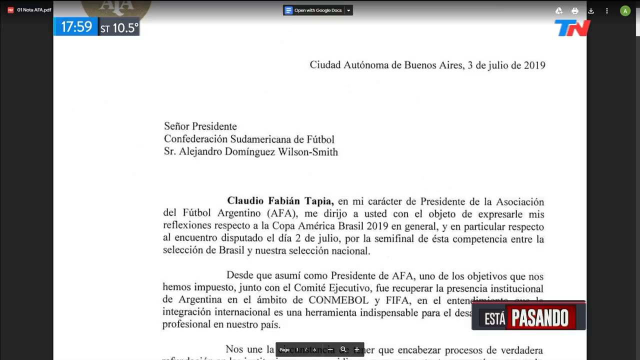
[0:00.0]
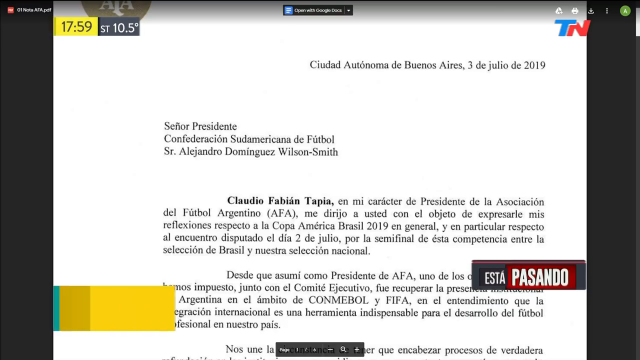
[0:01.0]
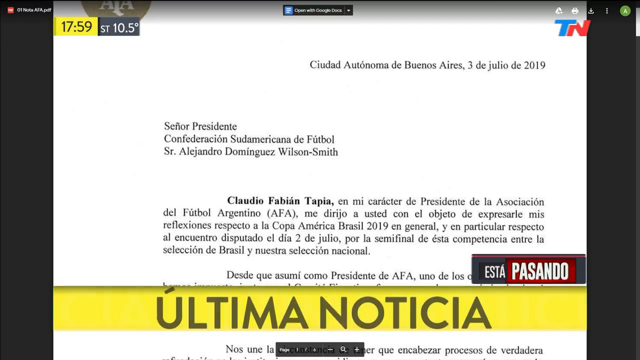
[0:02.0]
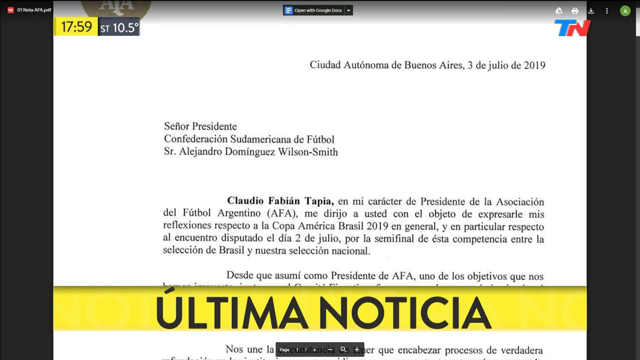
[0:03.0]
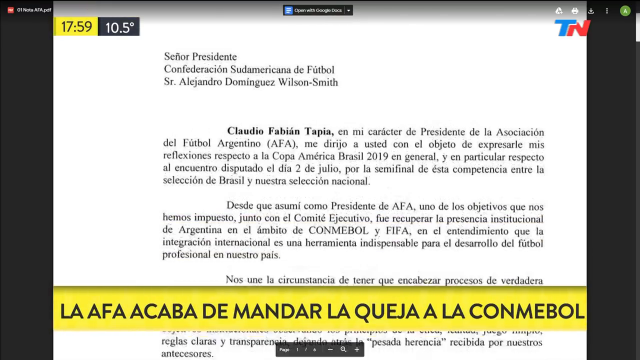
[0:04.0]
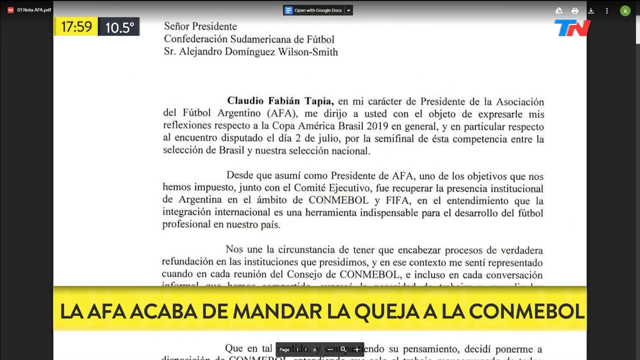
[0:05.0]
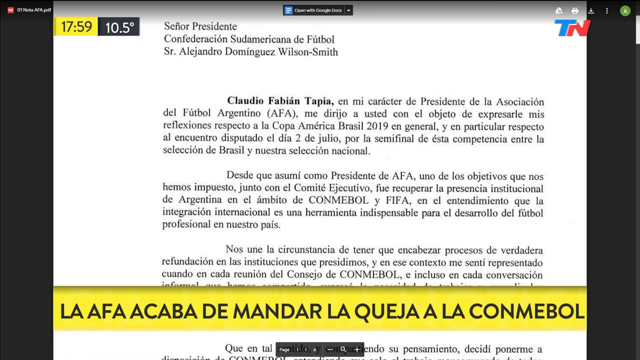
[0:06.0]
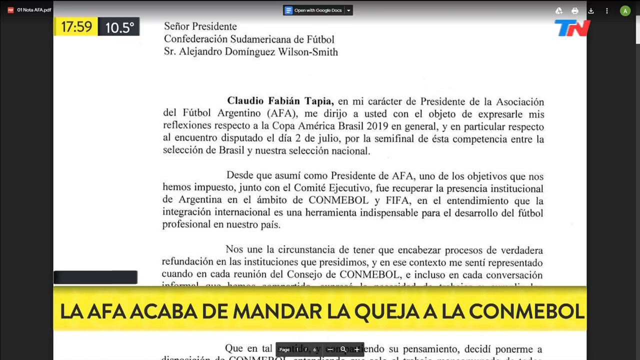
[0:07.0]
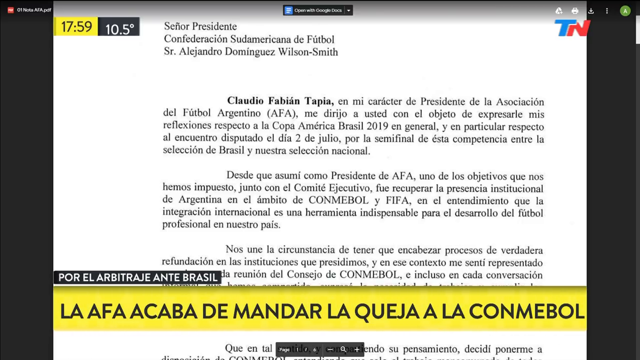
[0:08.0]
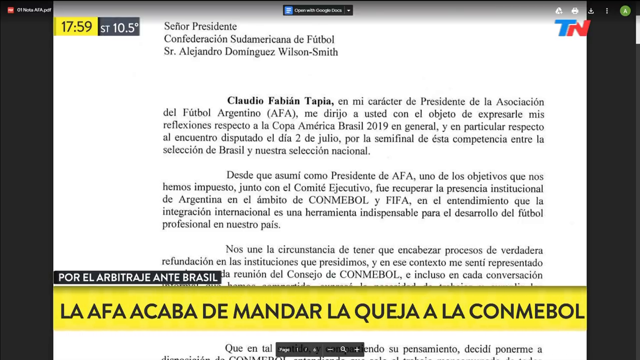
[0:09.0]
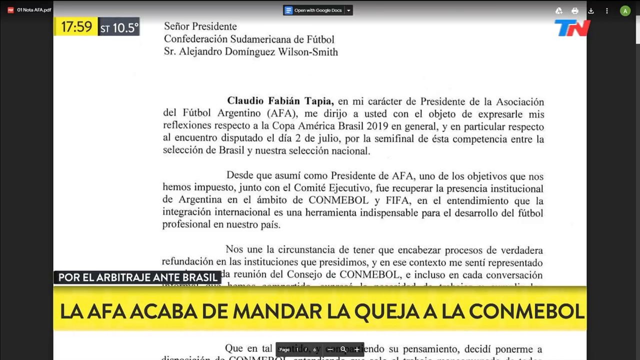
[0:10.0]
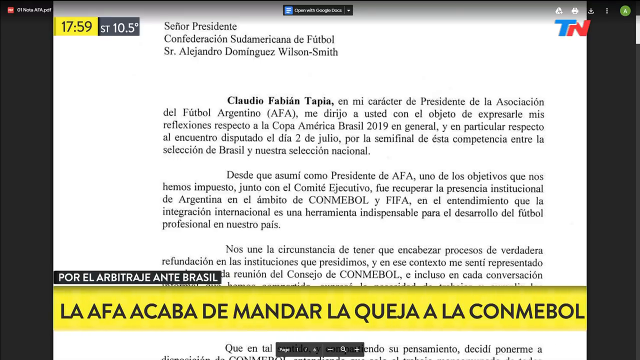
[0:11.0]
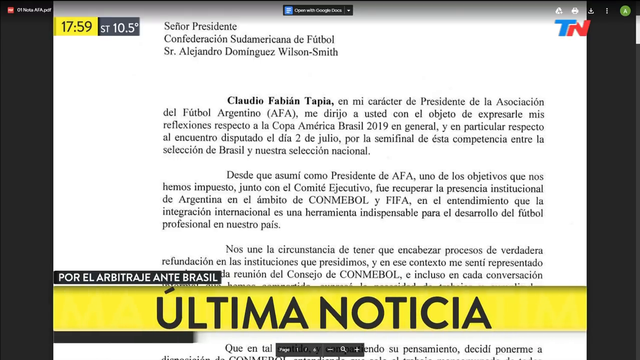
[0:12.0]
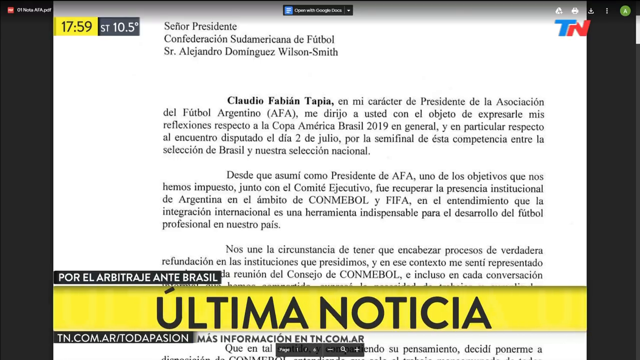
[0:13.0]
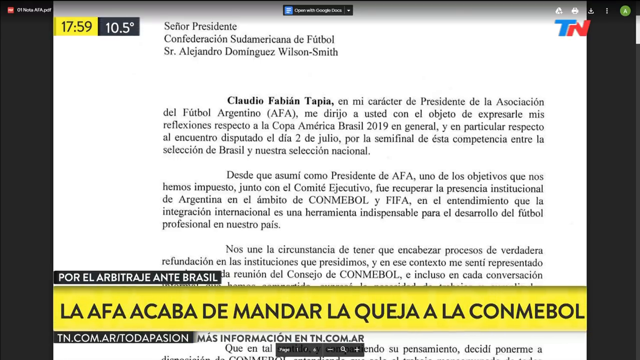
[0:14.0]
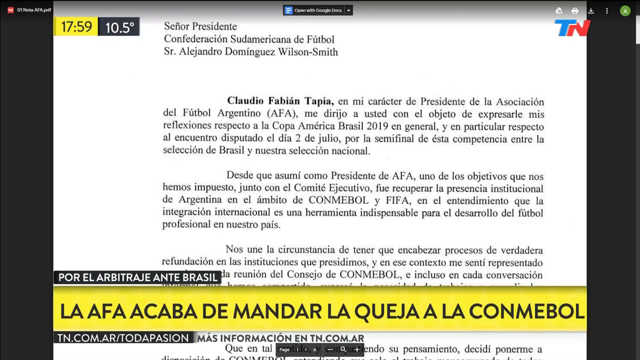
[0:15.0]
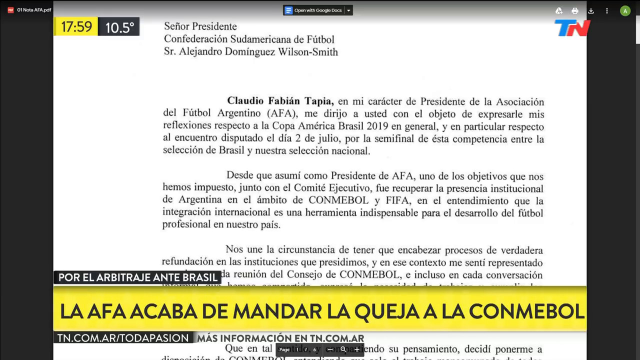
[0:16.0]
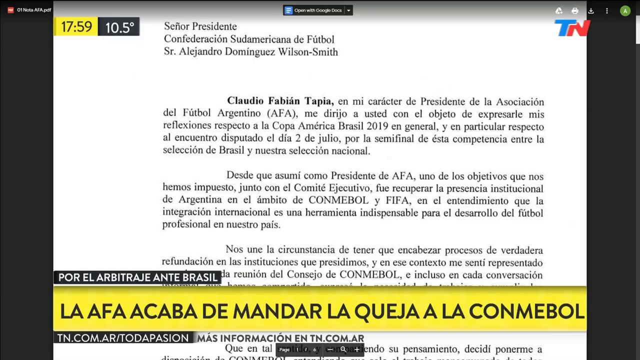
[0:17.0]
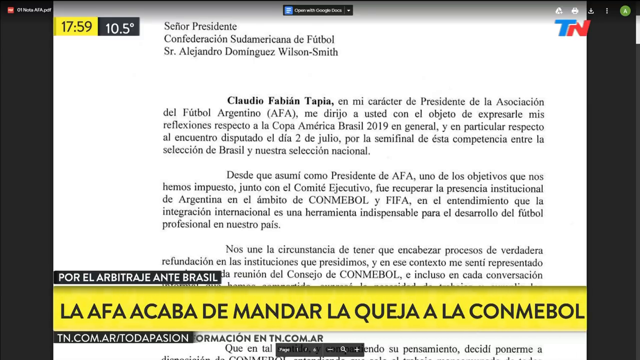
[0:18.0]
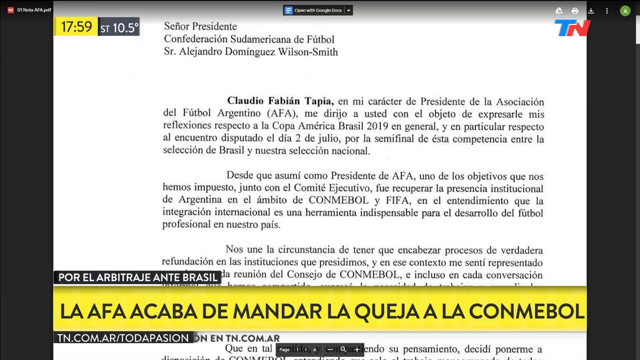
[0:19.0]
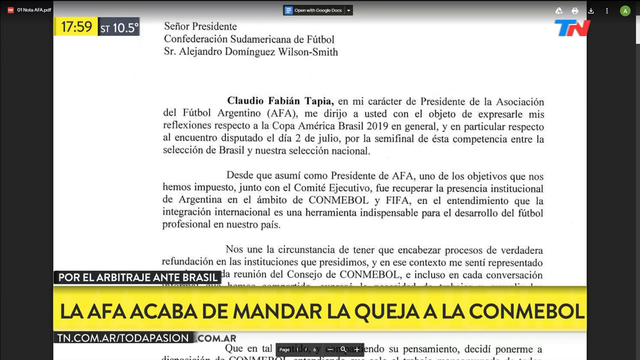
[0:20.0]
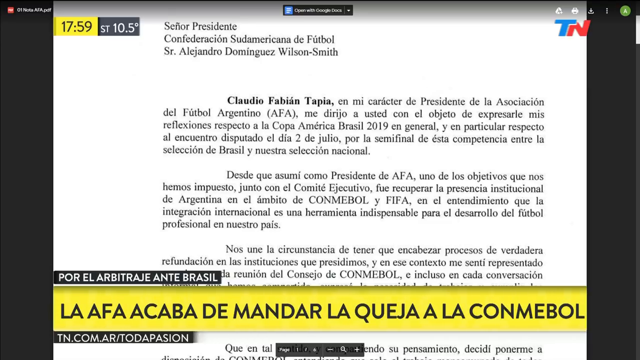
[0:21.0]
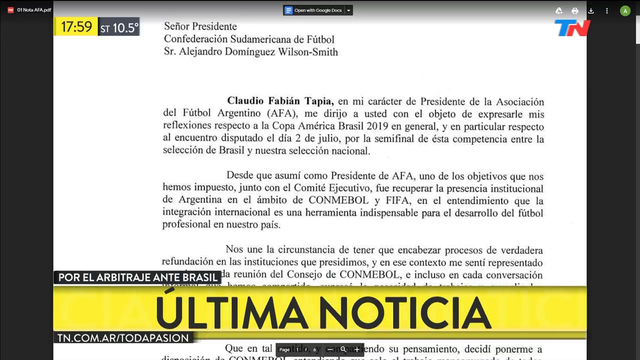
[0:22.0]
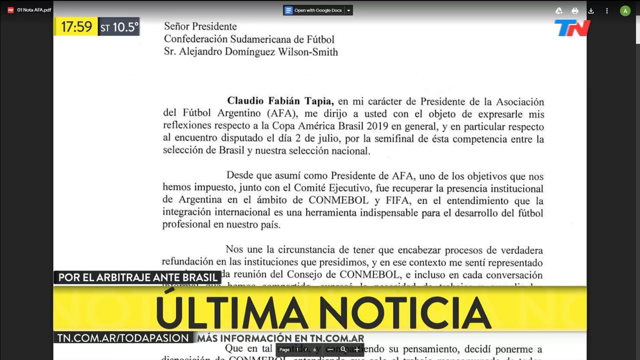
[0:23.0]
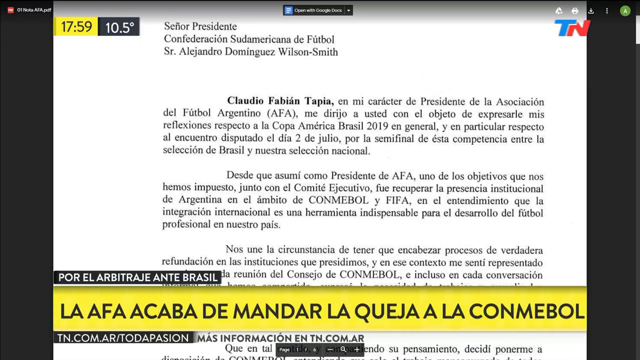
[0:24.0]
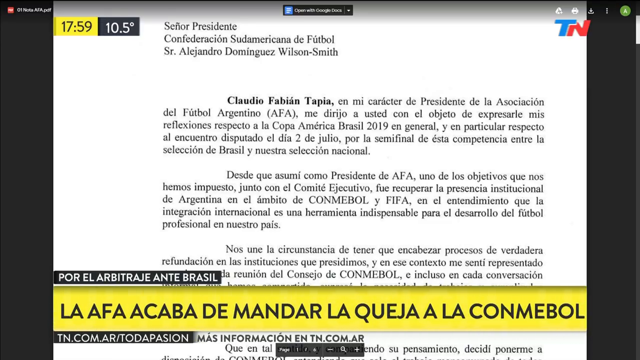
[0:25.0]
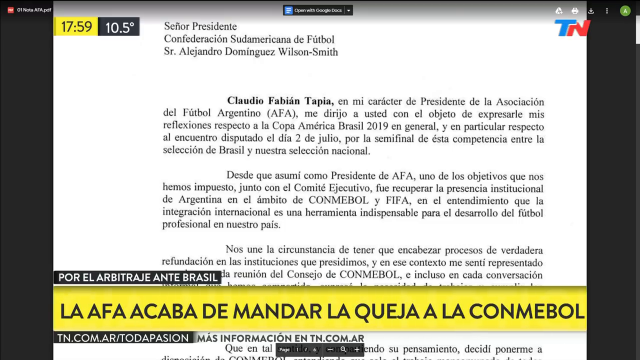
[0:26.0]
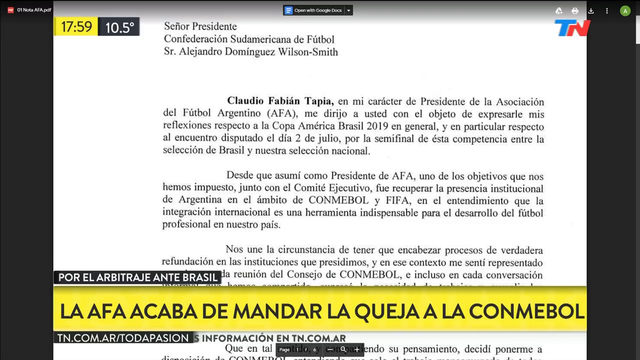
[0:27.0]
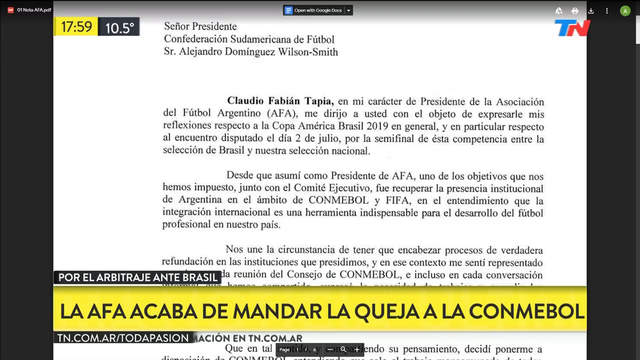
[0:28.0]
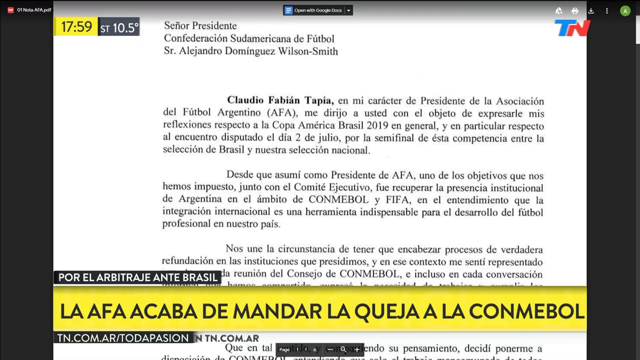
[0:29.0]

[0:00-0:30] The video opens on a page of text written in a foreign language, either Spanish or Portuguese and likely Portuguese, and it seems to have something to do with Brazil. The text gives the hour as 17, and the name Claudio Fabian Tapia appears. A small tab at the bottom of the screen reads "Pasando." The page contains a lot of words and was written in 2019. In the upper right-hand corner are the letters T and N, the T in blue and the N in red. It may be a web page or possibly a news site.